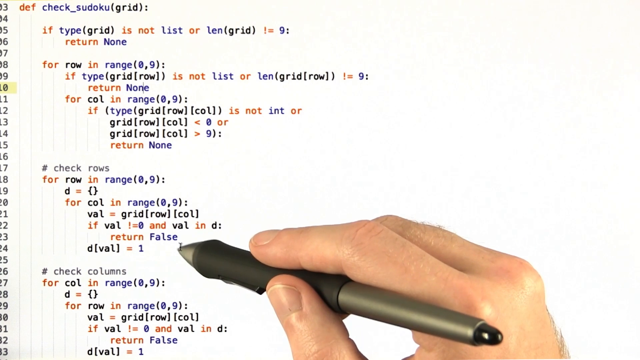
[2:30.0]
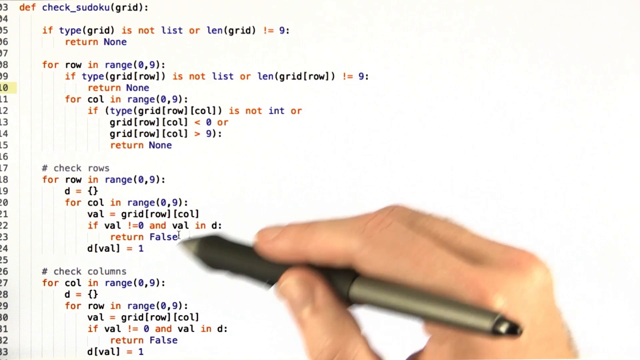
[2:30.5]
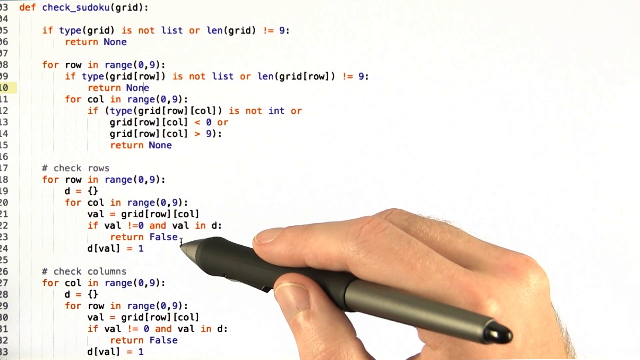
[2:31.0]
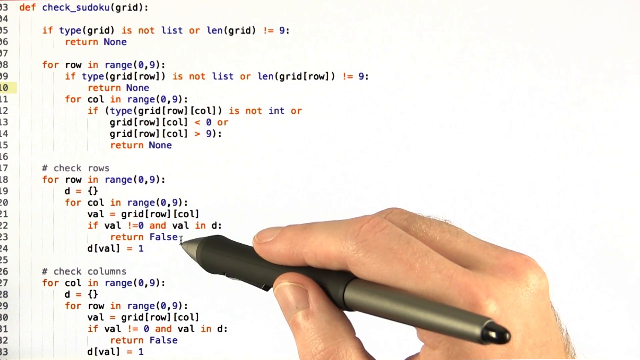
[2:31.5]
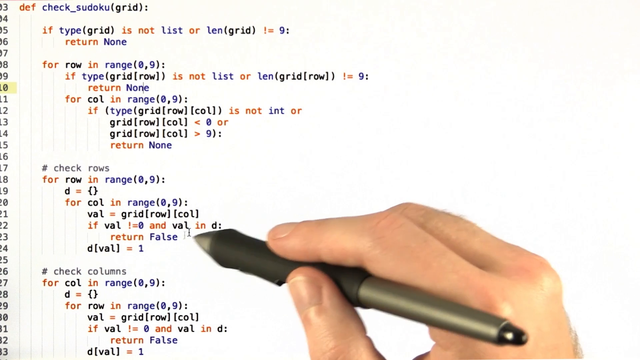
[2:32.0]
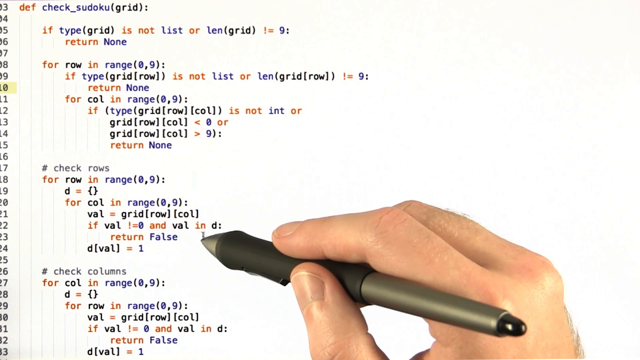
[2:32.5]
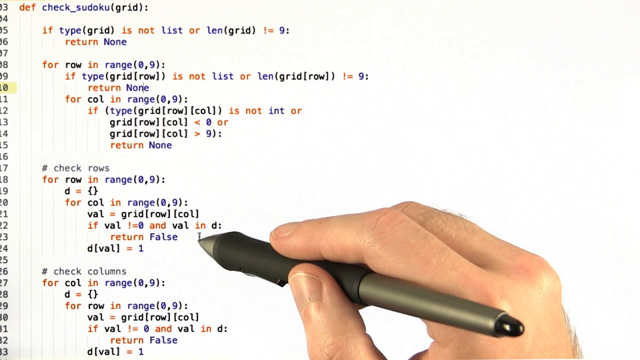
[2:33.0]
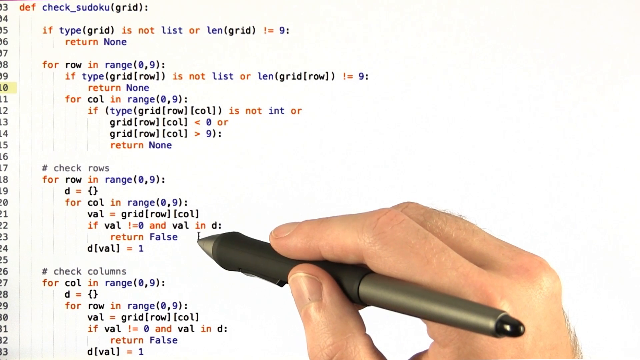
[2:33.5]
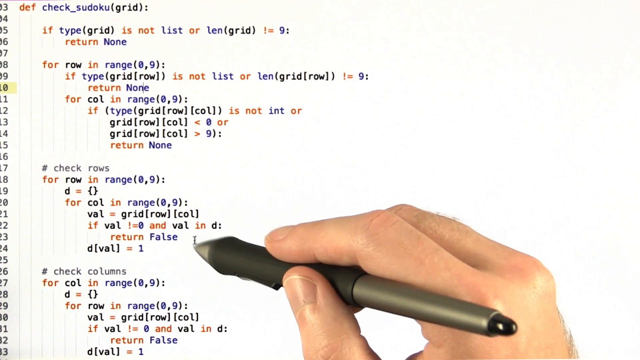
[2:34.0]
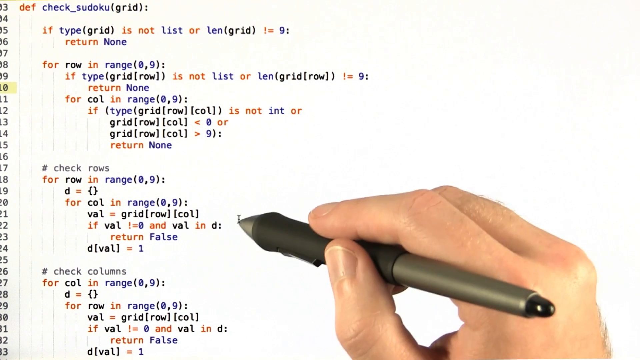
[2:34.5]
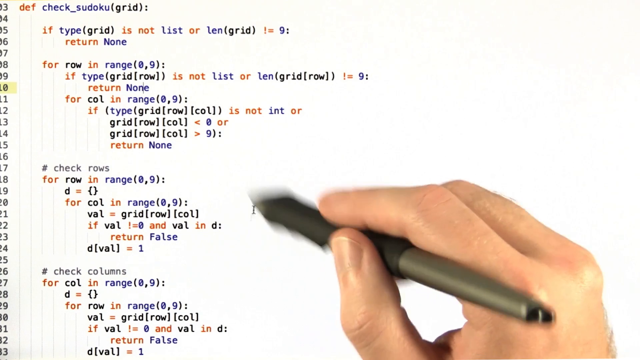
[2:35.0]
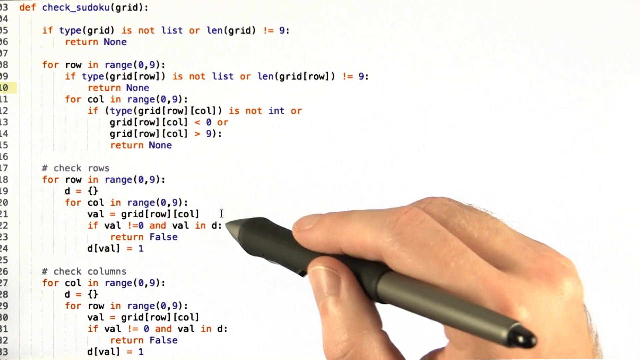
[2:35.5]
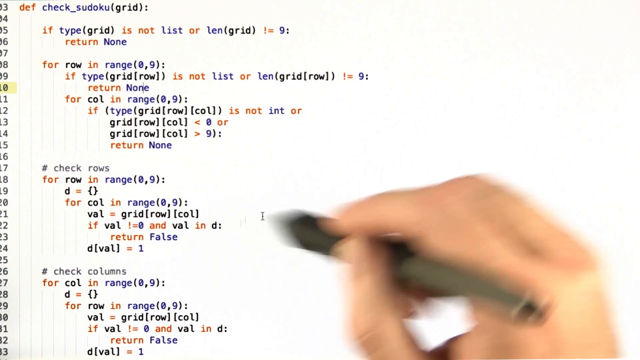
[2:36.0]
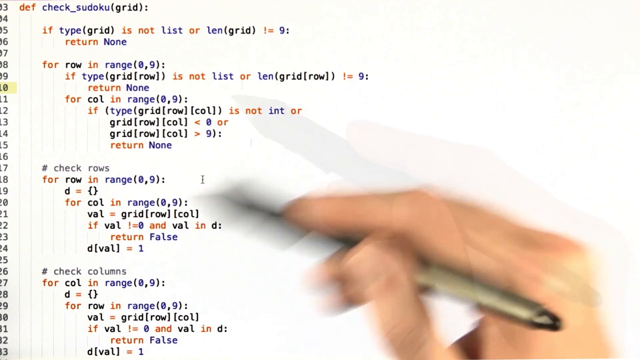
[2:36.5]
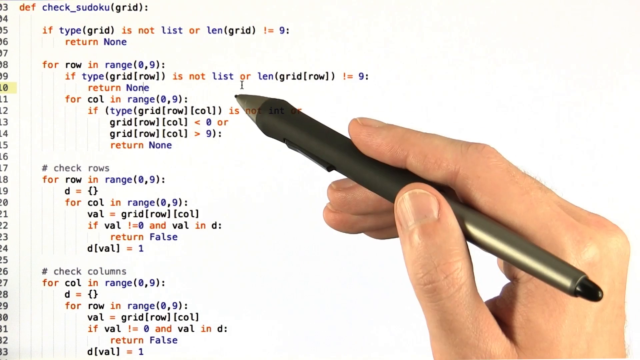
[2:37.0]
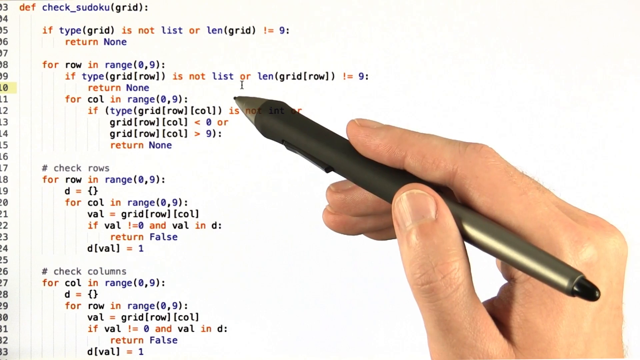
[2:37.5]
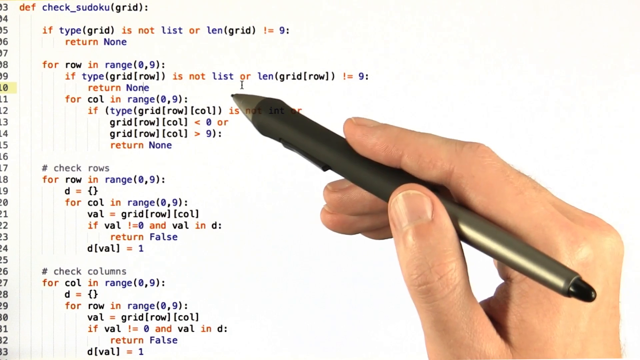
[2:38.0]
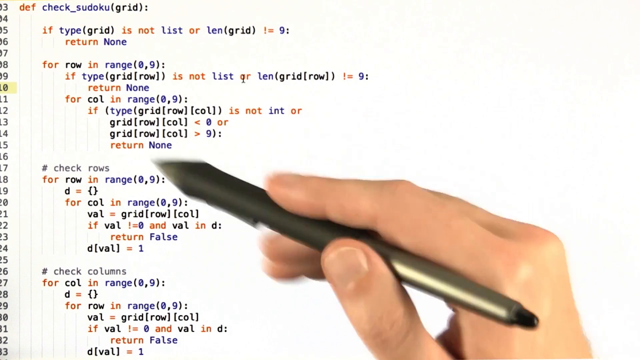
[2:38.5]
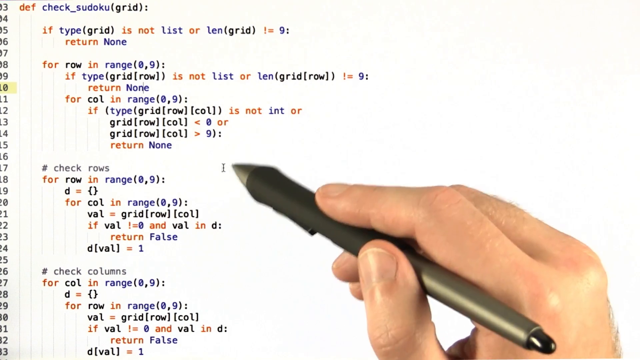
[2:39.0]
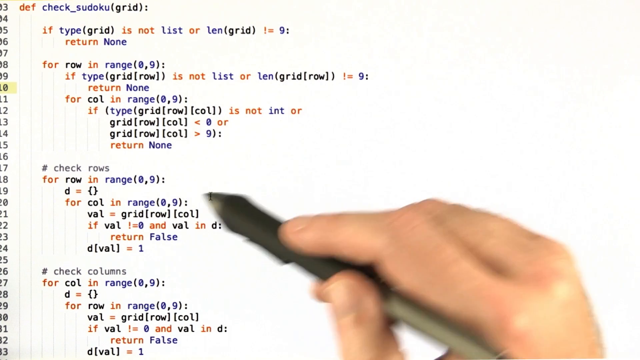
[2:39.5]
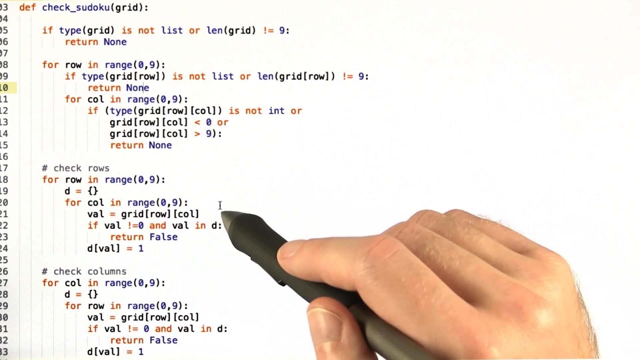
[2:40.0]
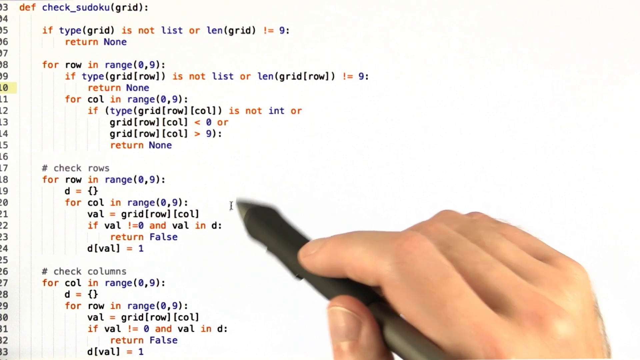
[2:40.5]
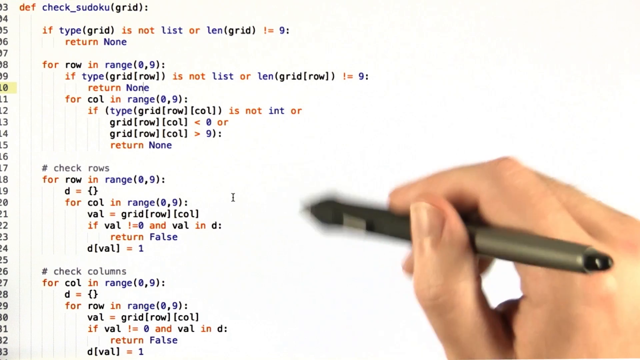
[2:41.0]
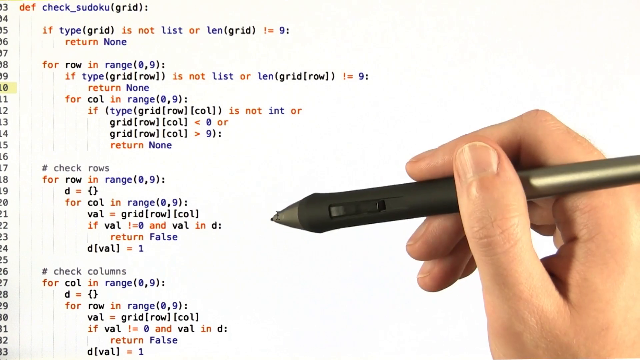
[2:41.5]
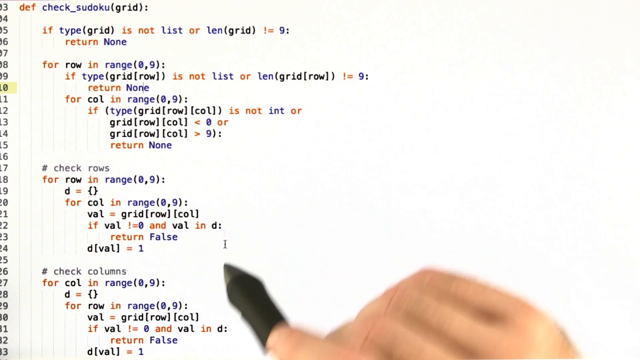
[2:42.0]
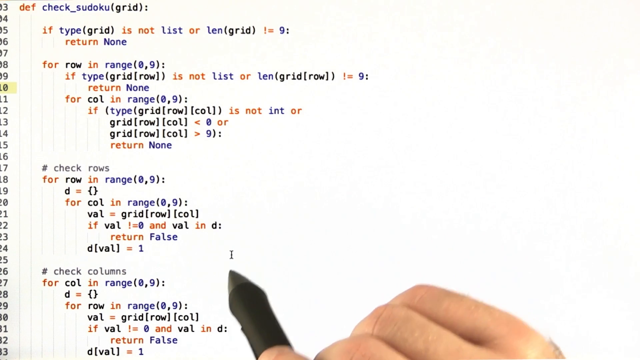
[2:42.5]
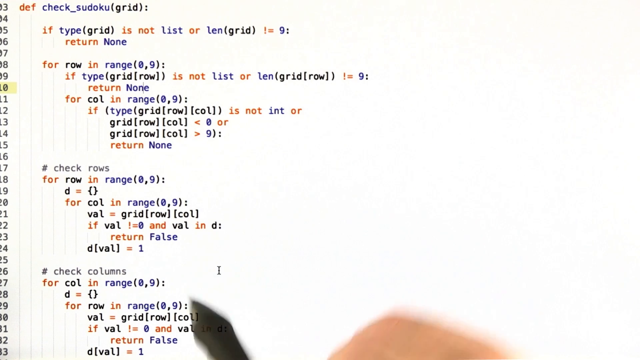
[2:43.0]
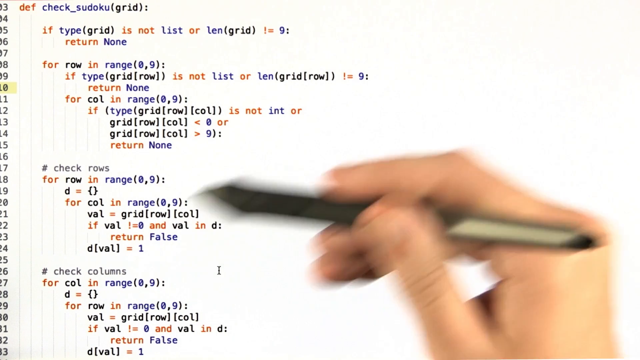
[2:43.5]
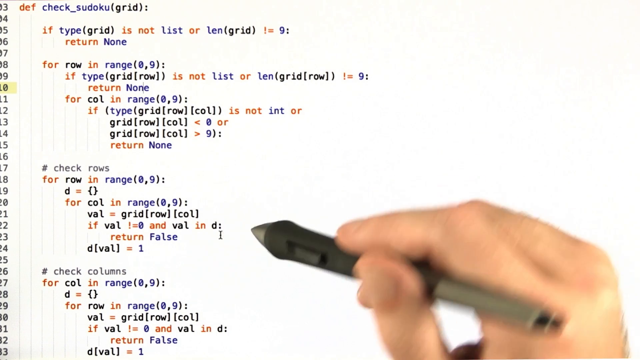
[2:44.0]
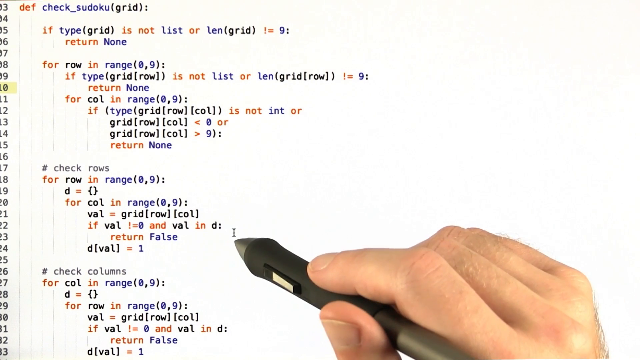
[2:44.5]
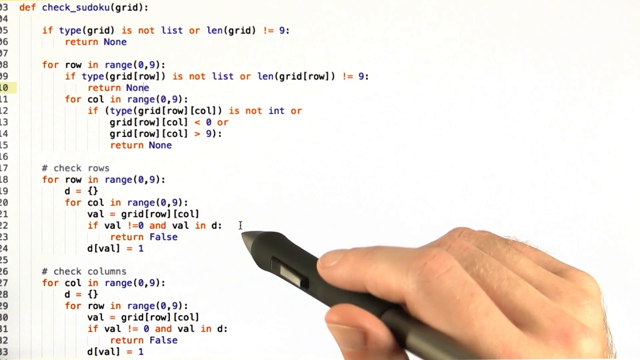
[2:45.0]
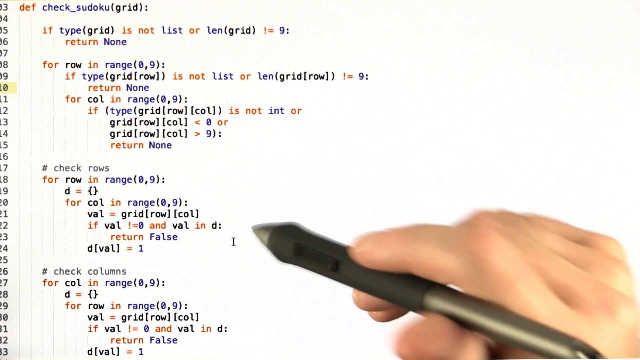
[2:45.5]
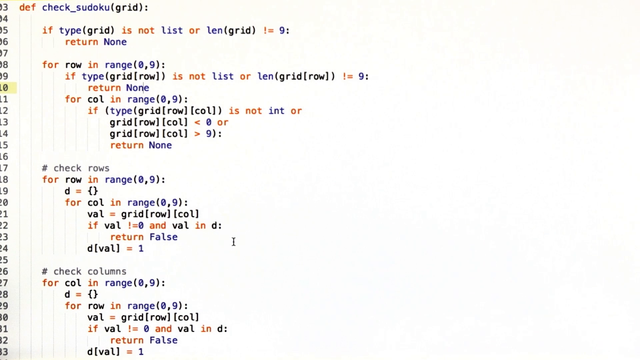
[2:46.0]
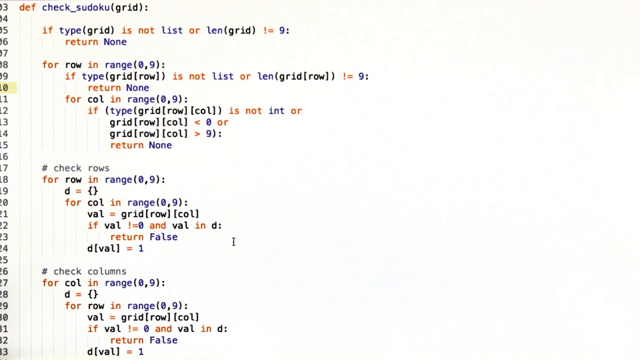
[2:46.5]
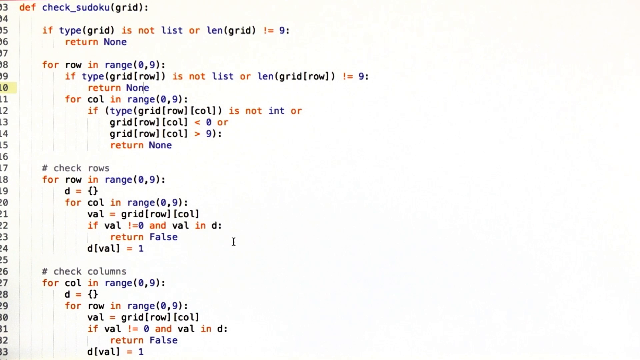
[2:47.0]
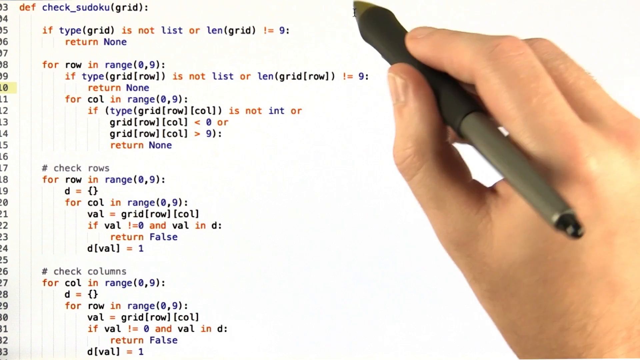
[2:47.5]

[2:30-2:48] The code appears on a white background with a white grid and row numbers on the left; what looks like row 30 is possibly highlighted in yellow. The person focuses on what could be called the second section of code, which has the comment "check rows". Beneath it are a for statement reading "for row" with "range 09", then an indented line with "D equals" and open and closed brackets. Below that is another for statement, "call in range 0 to 9", some values and another if statement. The last part of the section shows "D" with brackets containing the word "val", followed by "equal 1". The pen moves over this code as if each line's function is being described.